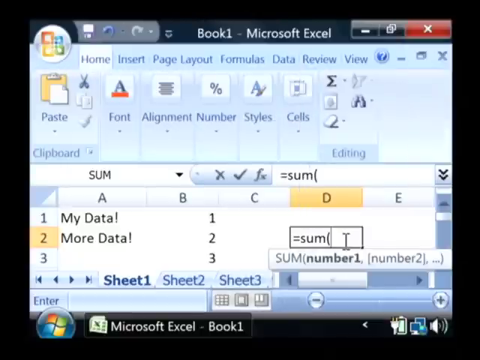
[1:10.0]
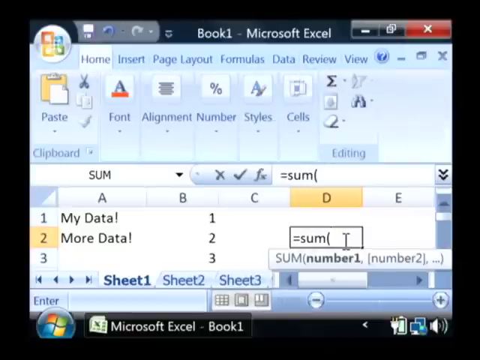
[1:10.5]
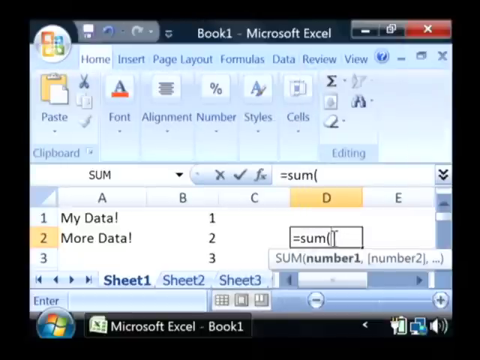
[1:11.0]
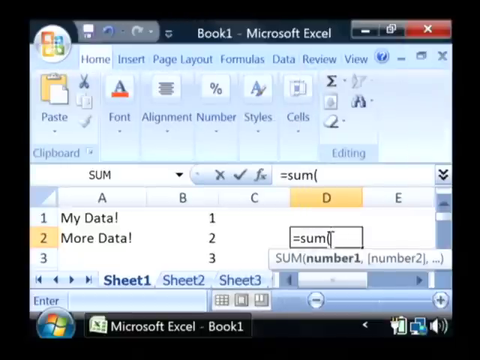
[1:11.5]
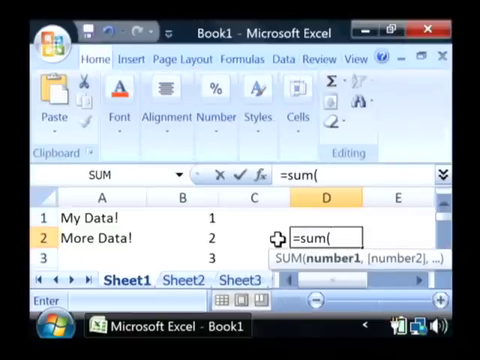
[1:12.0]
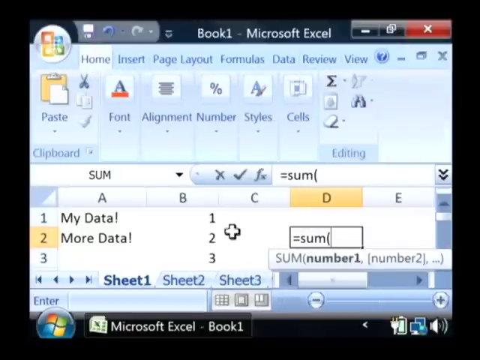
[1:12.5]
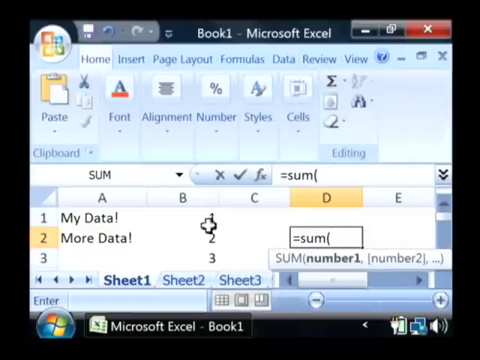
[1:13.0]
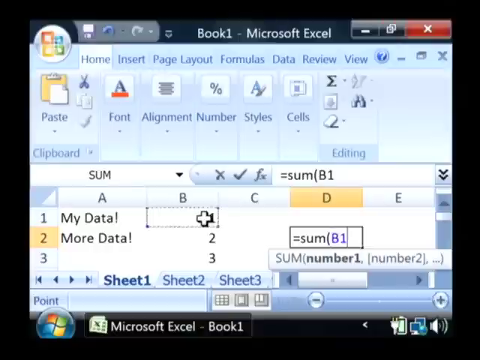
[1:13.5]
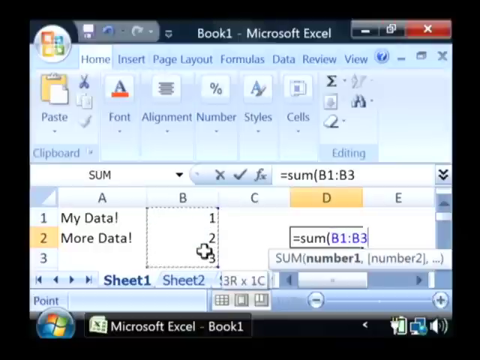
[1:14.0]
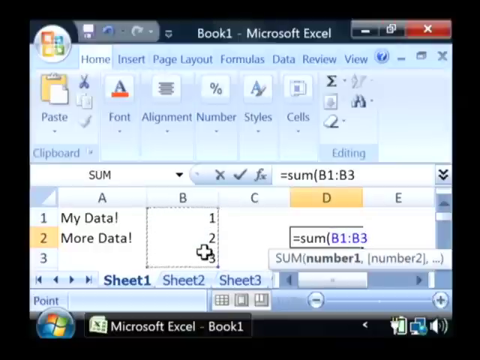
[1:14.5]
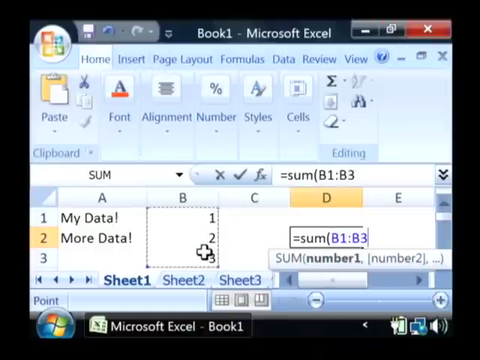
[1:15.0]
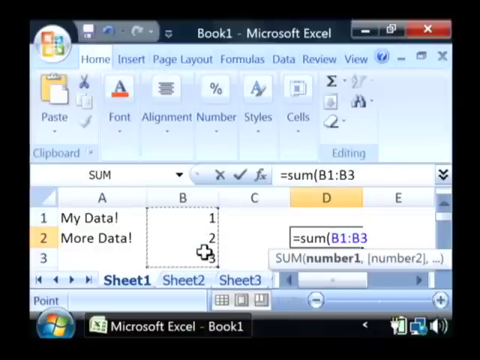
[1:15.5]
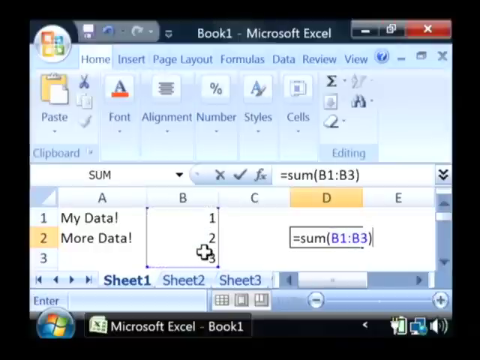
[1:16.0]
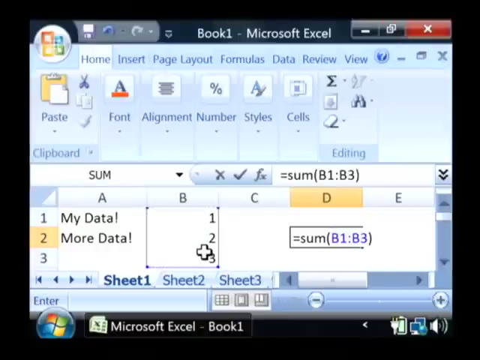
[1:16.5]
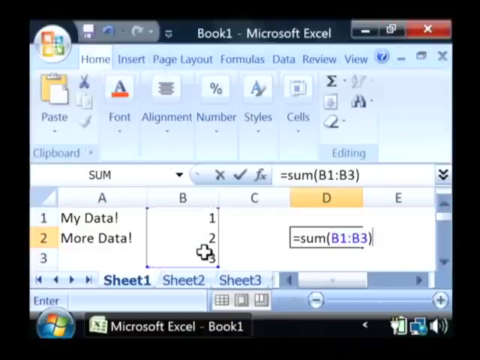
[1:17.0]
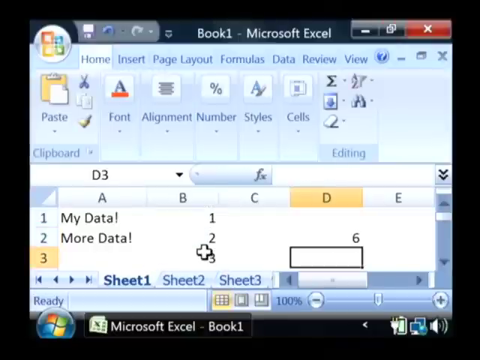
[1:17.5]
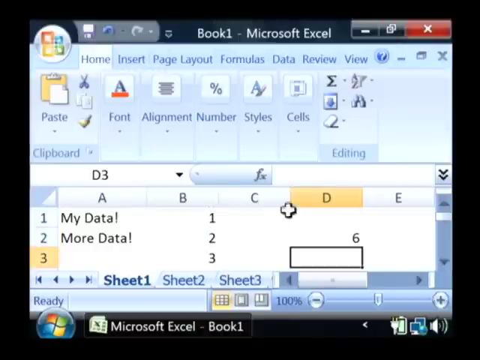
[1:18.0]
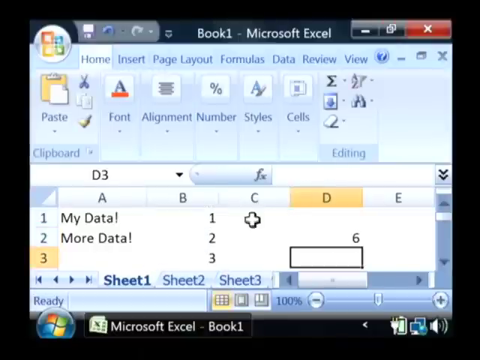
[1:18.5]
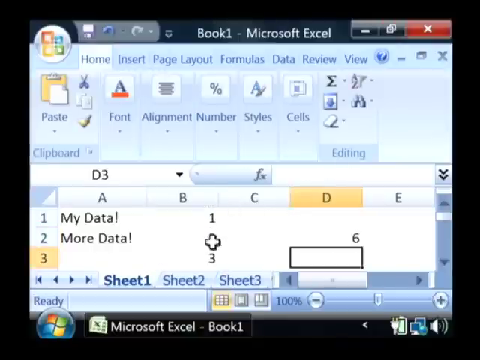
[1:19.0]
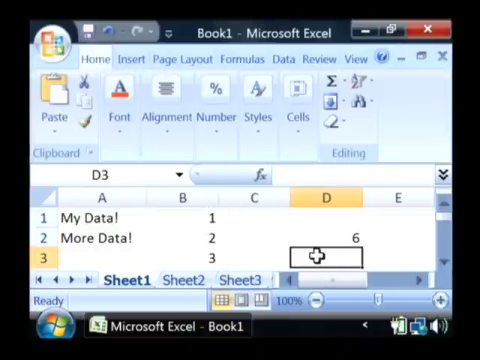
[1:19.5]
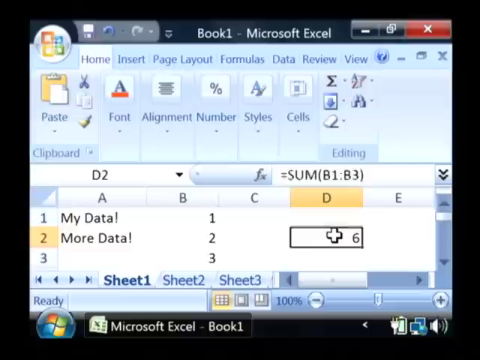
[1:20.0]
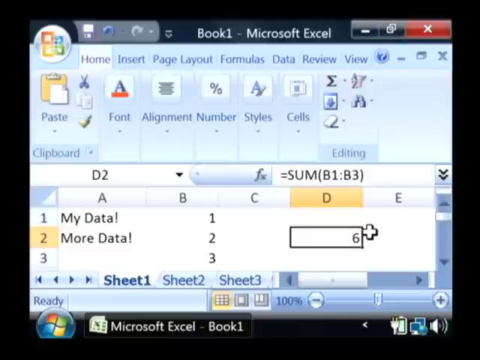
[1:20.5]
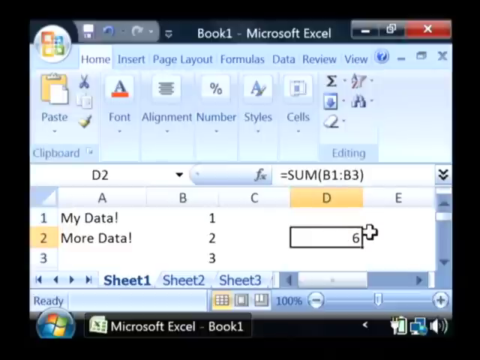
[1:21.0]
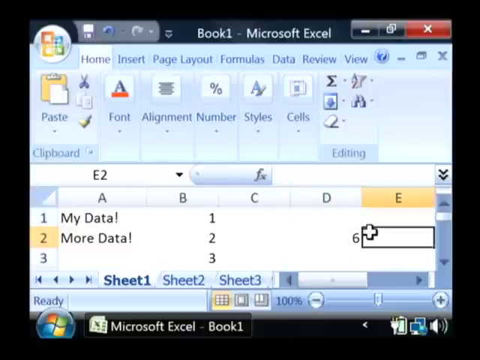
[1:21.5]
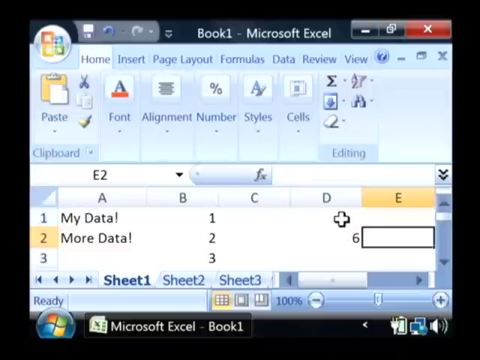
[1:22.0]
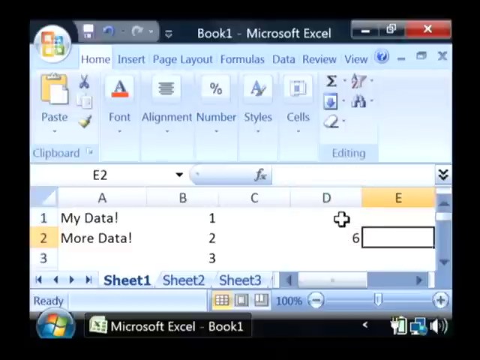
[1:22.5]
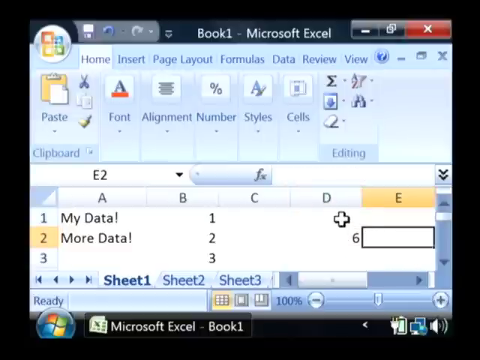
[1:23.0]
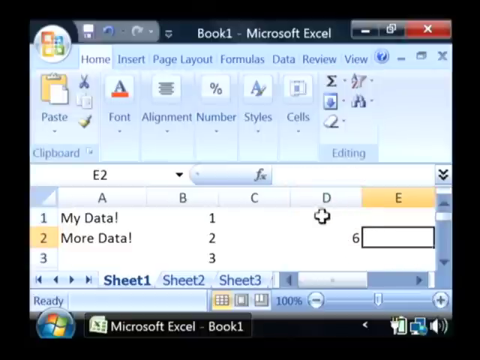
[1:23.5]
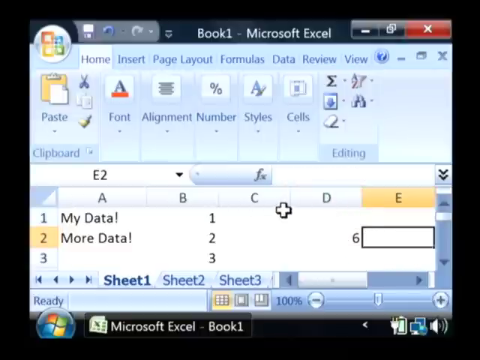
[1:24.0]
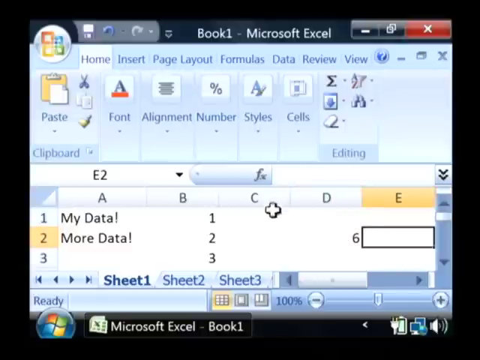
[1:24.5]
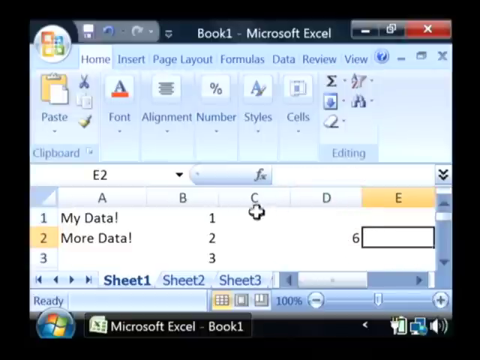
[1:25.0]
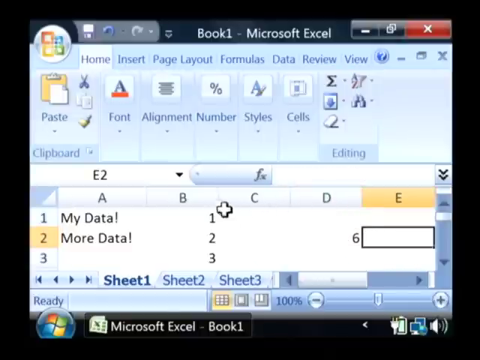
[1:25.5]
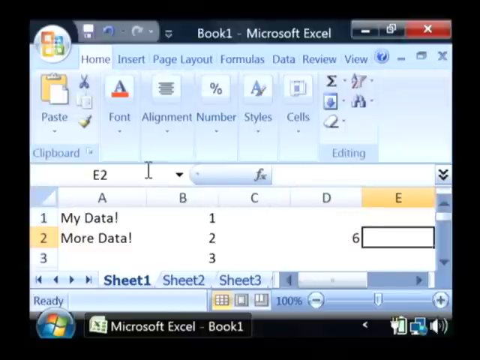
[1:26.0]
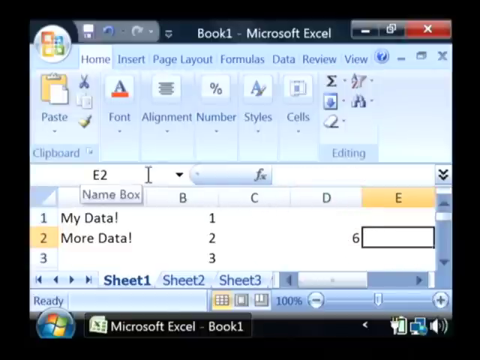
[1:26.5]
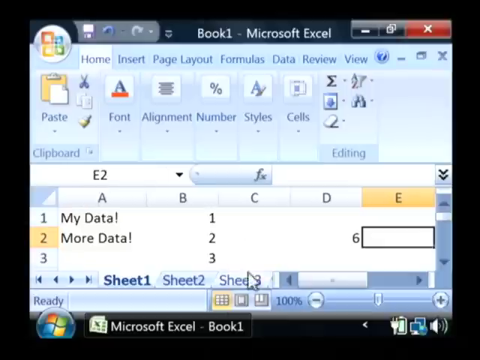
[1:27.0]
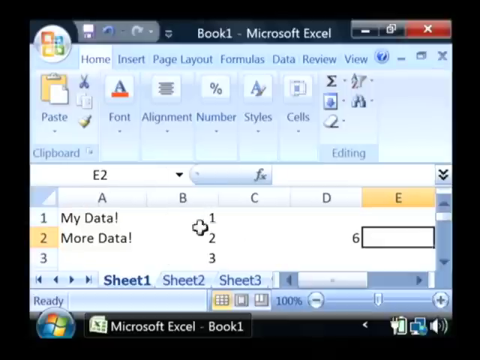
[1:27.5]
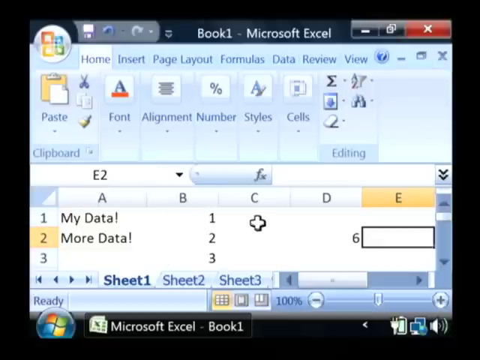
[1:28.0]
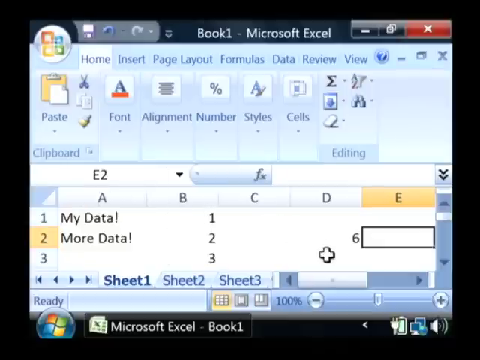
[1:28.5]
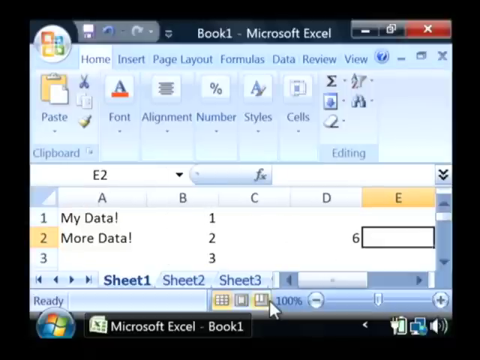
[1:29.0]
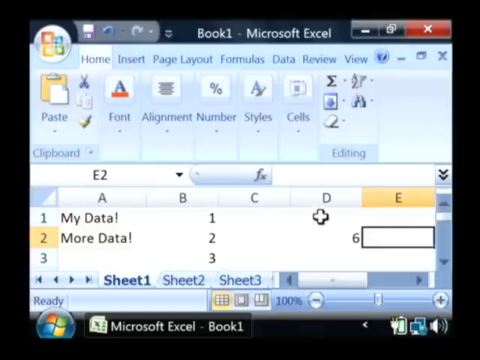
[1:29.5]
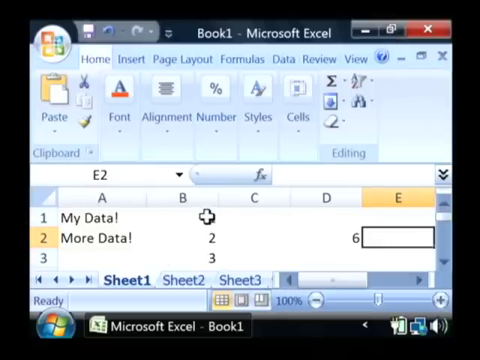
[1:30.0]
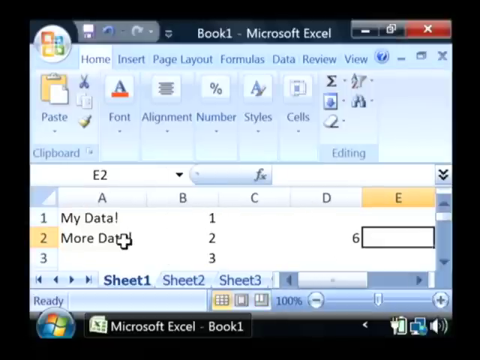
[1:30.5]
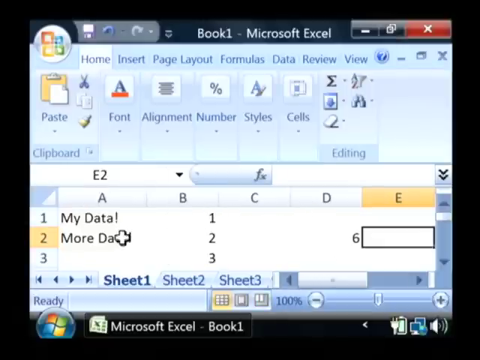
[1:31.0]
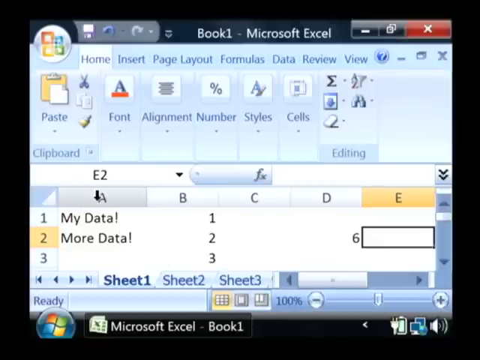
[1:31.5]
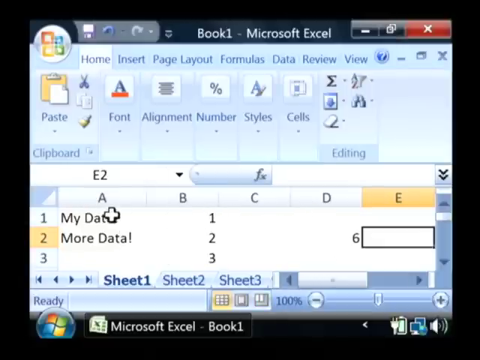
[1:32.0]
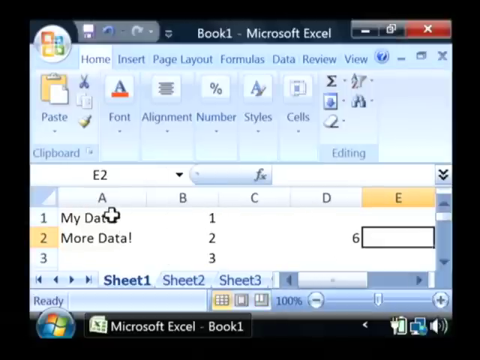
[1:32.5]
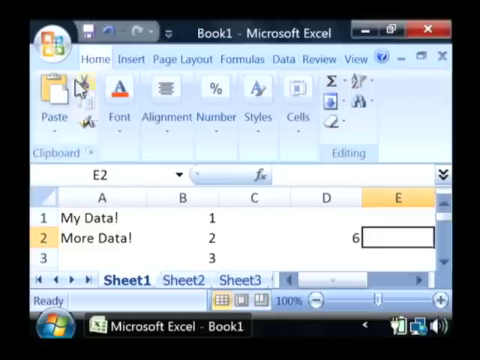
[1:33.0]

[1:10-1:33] The zoomed-in Microsoft Excel 2007 screen, powder blue as is typical of the program, shows only columns A through E and rows 1 through 3. Cell A1 contains "more data!", cell A2 "more data!", cell B1 the number 1, cell B2 2, and cell B3 3. The E and 2 headers are highlighted in yellow, and that cell has a black rectangle around it indicating it is selected. The user types the formula "=sum(" and then selects cells B1, B2 and B3, which puts a 6 in that cell. They then click on cell E2 and move the mouse around the screen haphazardly; the pointer is a white cross with a black outline. They hover over various areas, and the video ends with the mouse over the scissors icon in the top left.